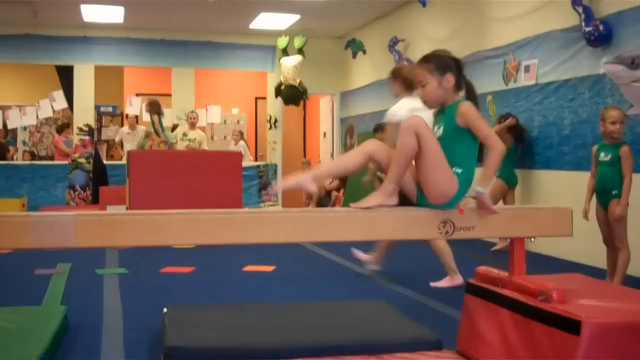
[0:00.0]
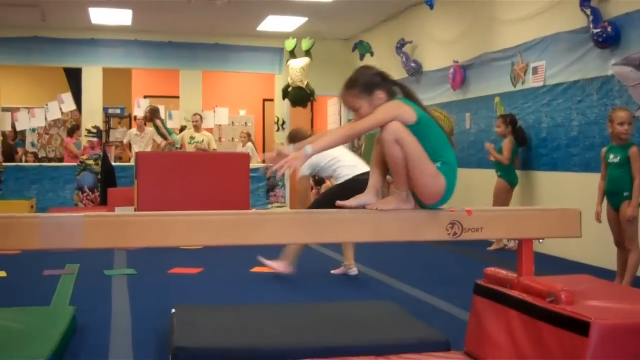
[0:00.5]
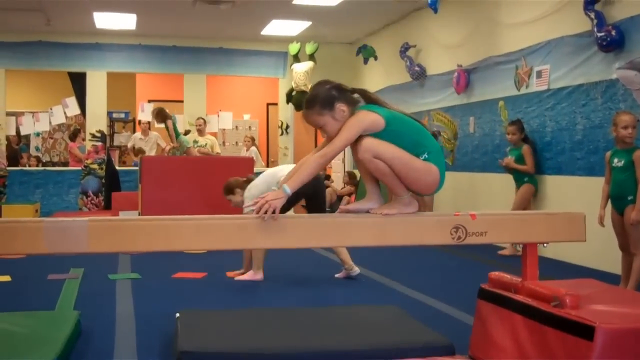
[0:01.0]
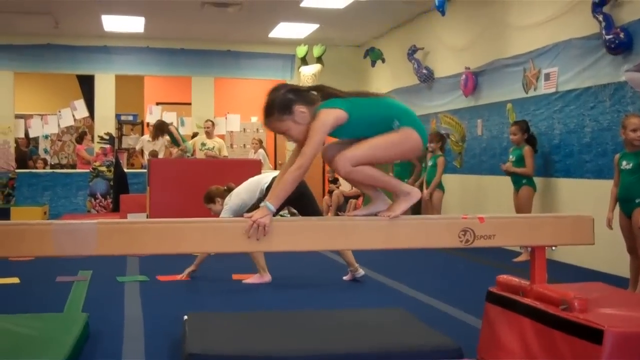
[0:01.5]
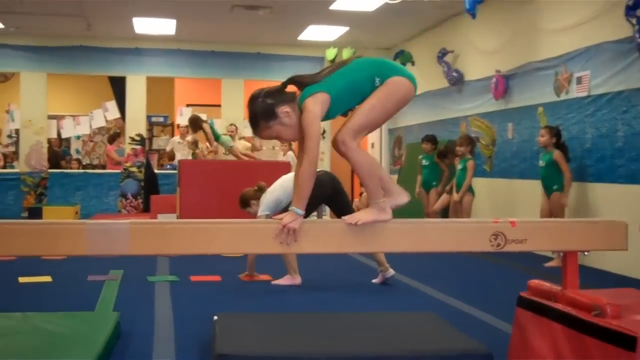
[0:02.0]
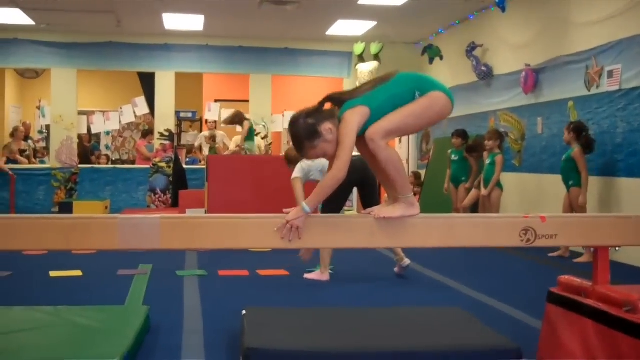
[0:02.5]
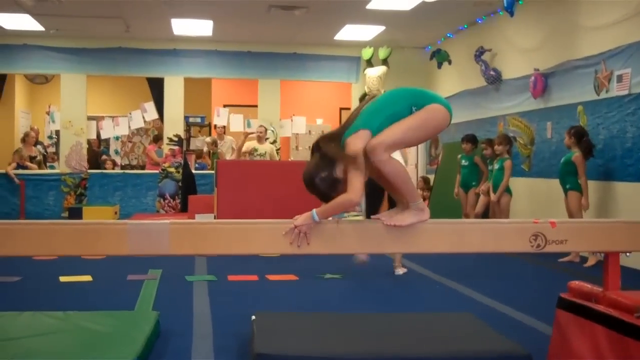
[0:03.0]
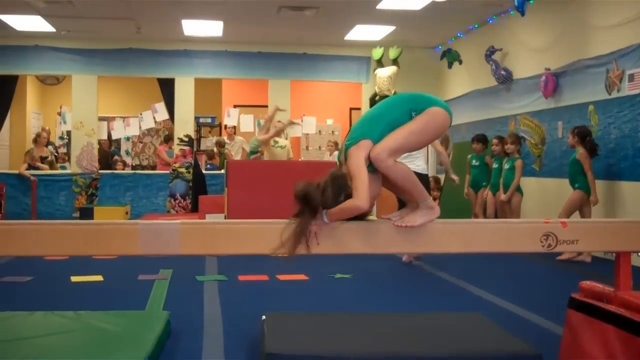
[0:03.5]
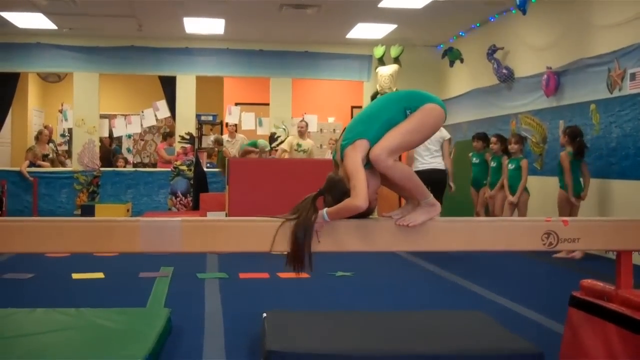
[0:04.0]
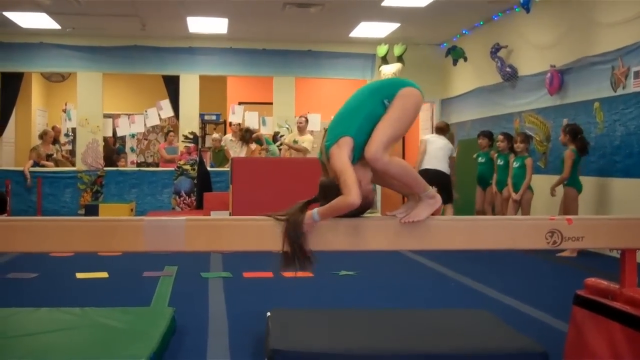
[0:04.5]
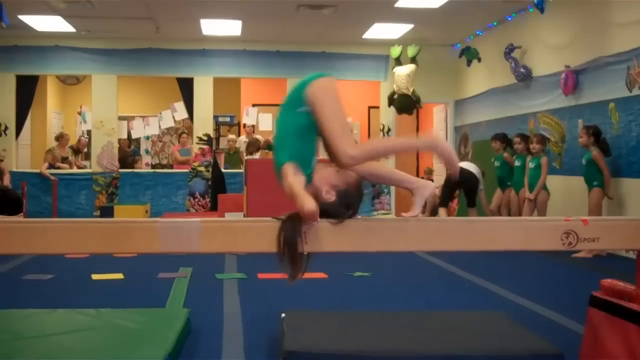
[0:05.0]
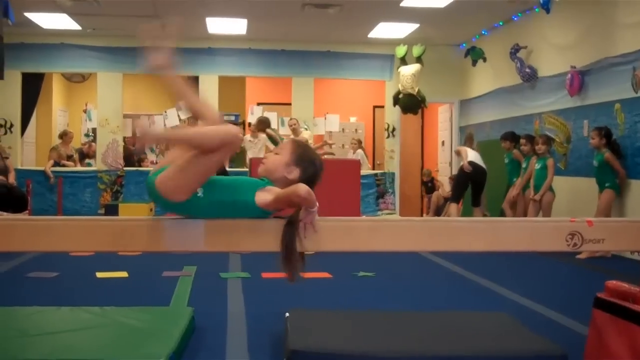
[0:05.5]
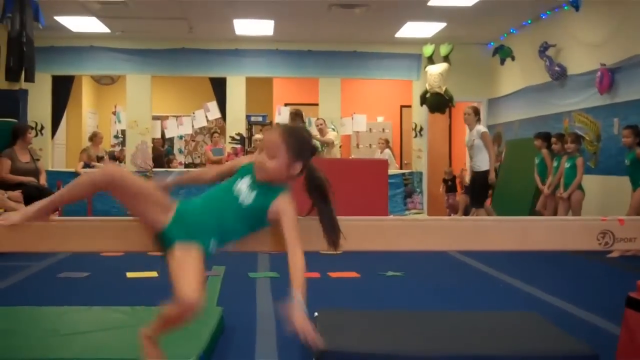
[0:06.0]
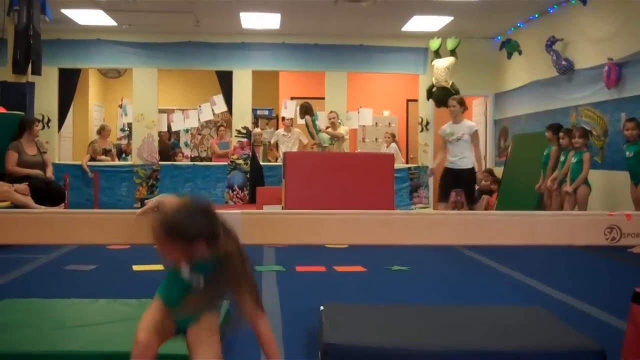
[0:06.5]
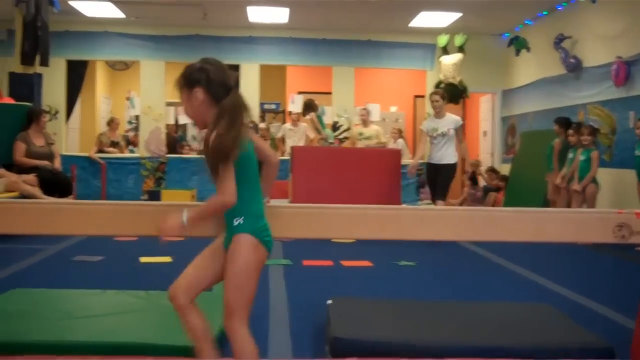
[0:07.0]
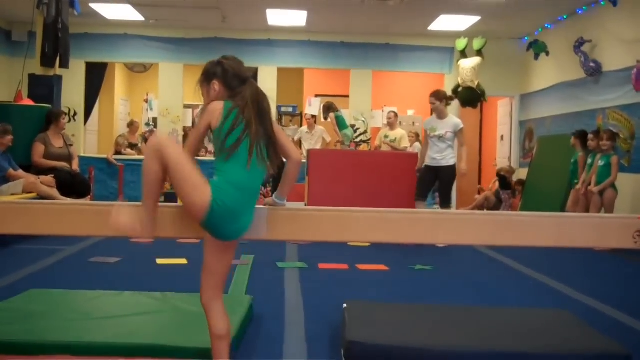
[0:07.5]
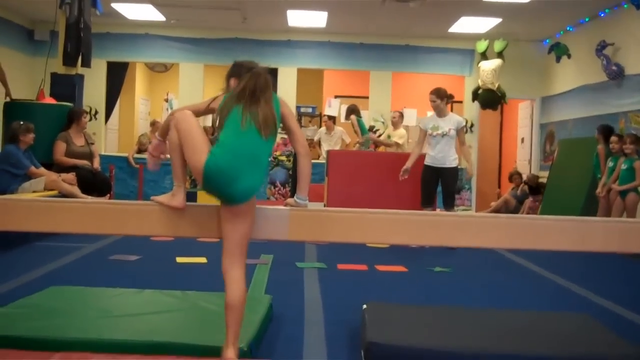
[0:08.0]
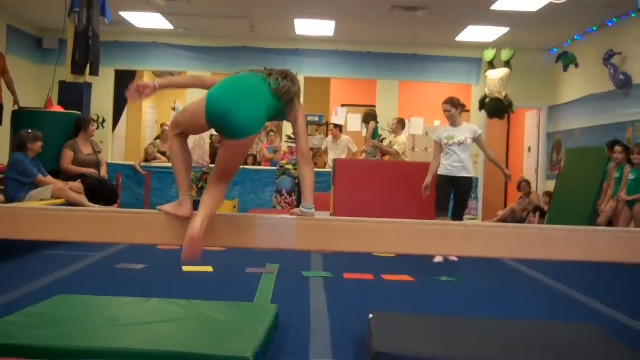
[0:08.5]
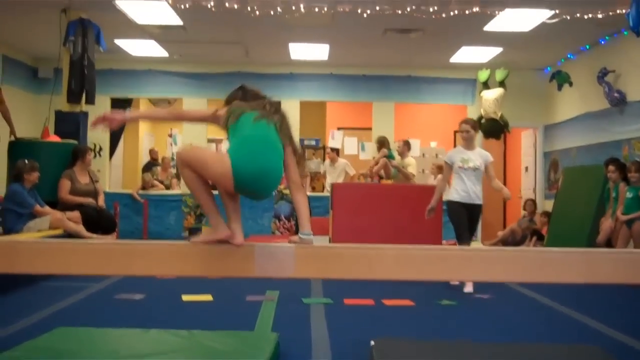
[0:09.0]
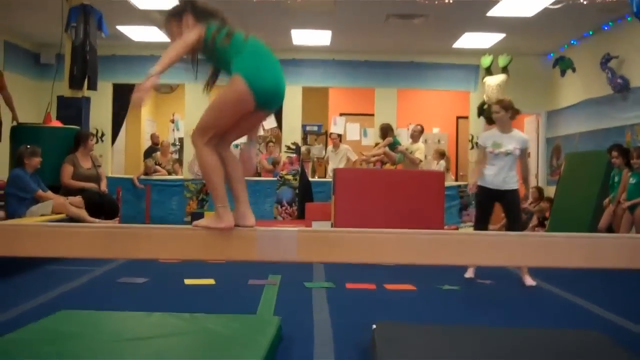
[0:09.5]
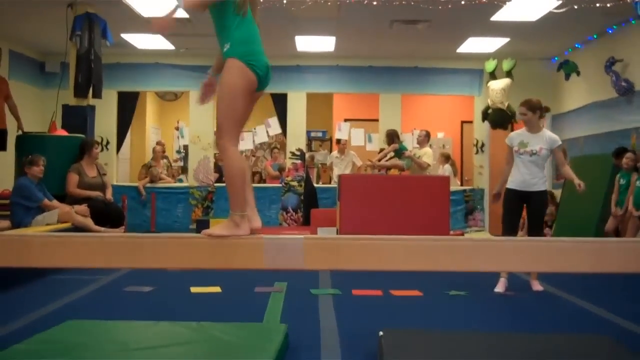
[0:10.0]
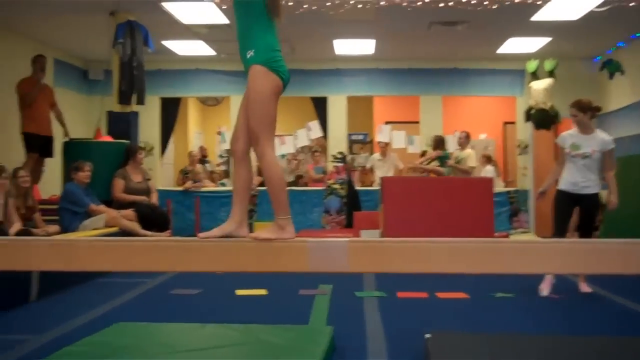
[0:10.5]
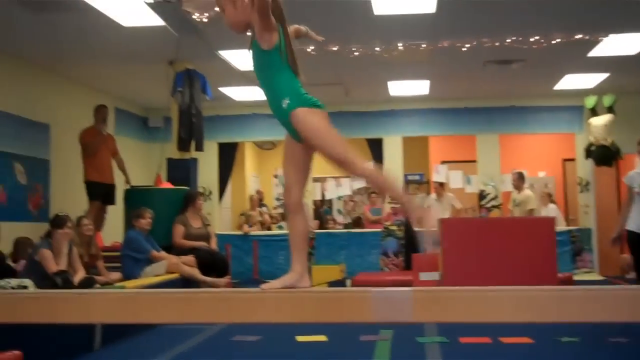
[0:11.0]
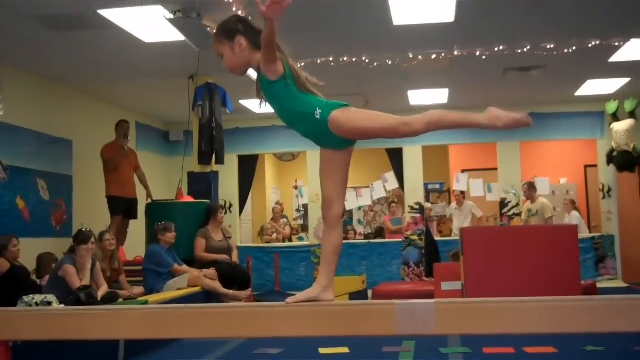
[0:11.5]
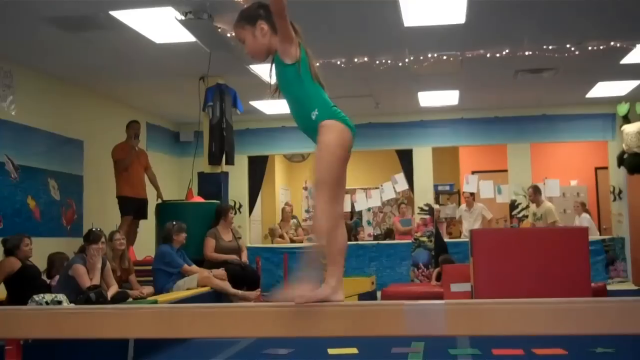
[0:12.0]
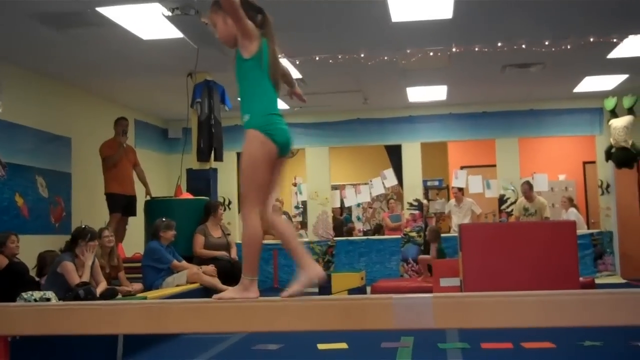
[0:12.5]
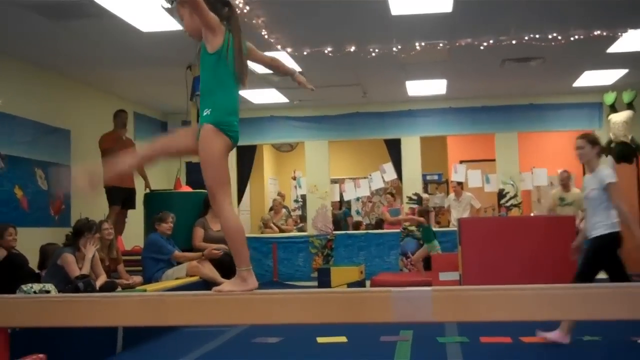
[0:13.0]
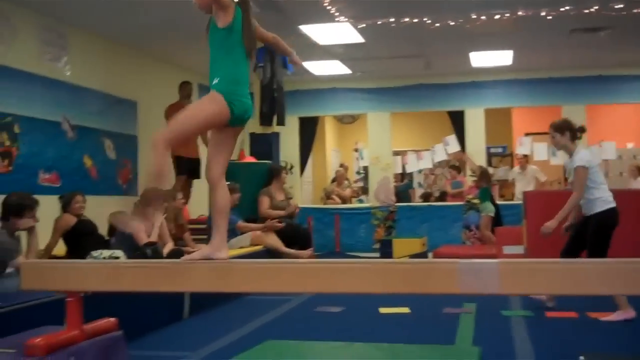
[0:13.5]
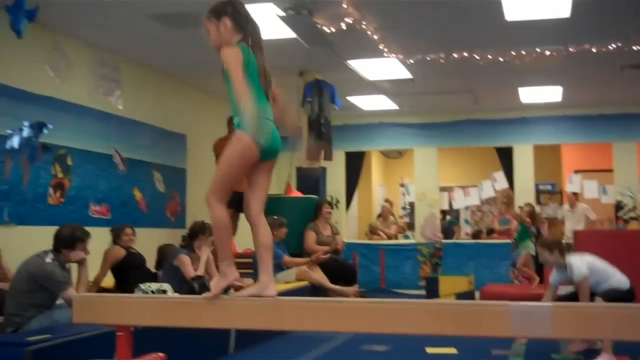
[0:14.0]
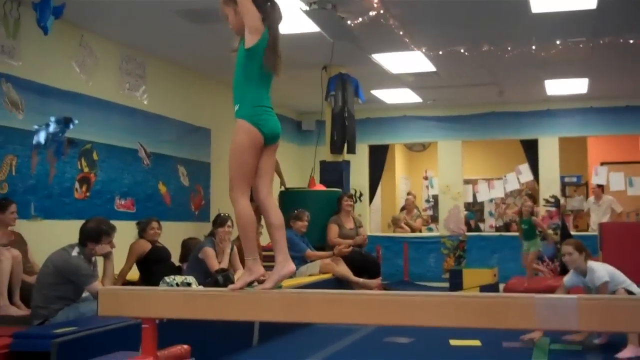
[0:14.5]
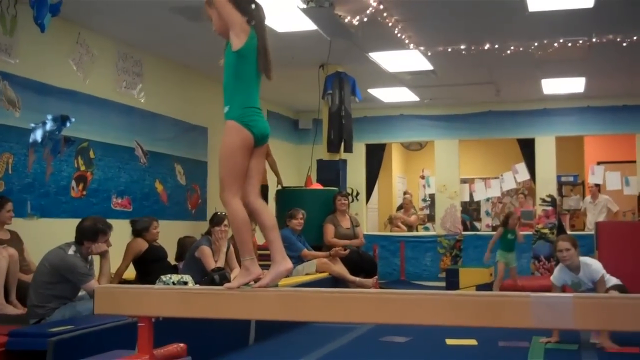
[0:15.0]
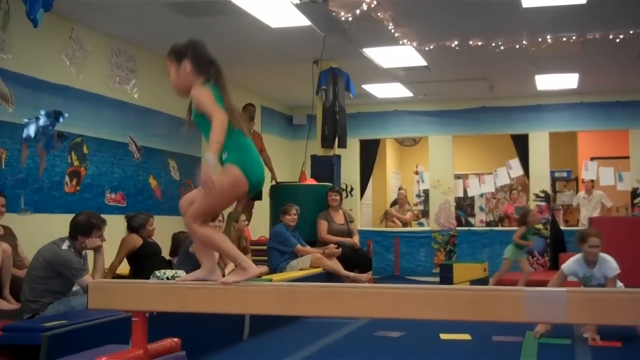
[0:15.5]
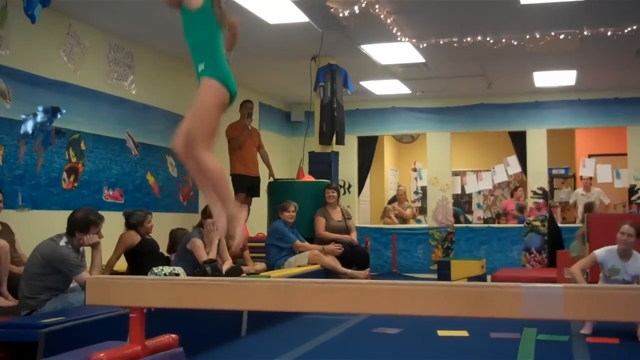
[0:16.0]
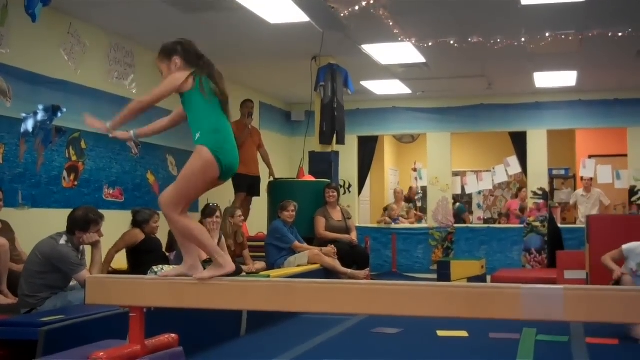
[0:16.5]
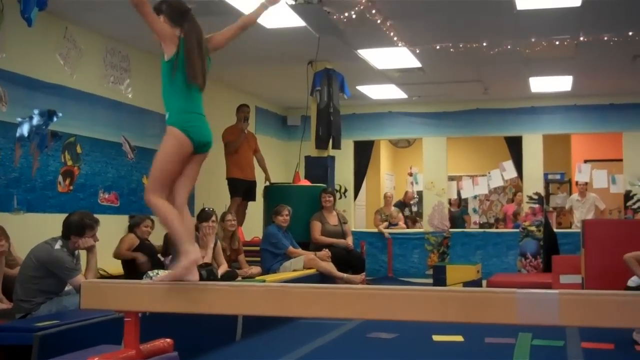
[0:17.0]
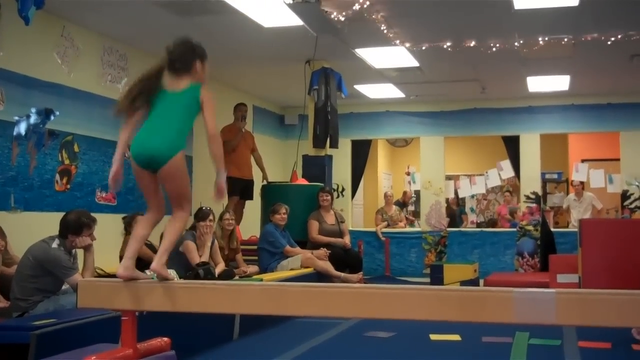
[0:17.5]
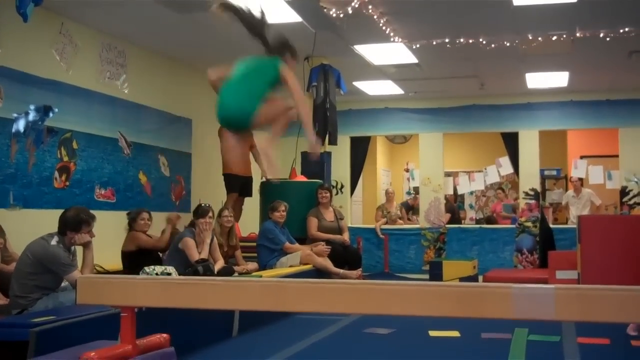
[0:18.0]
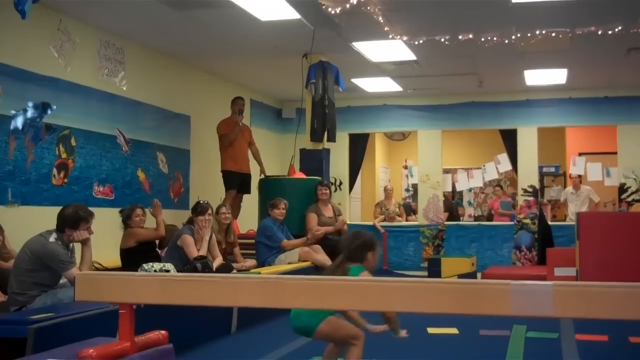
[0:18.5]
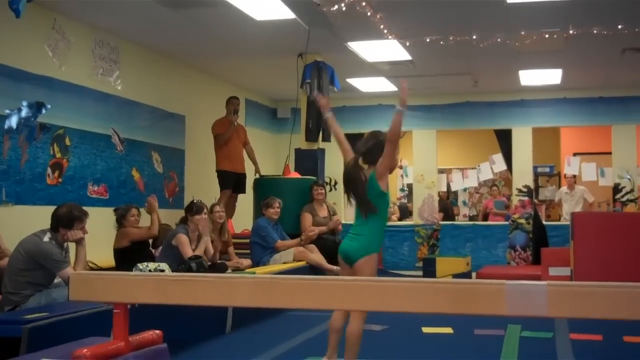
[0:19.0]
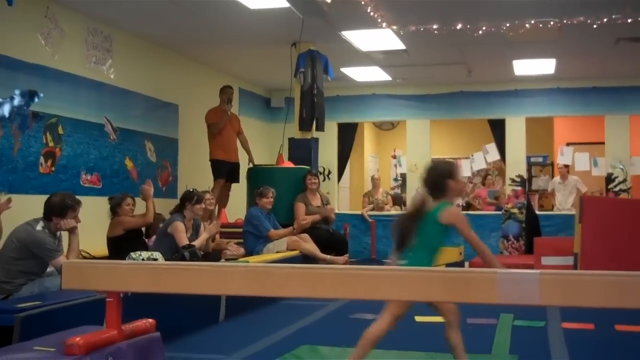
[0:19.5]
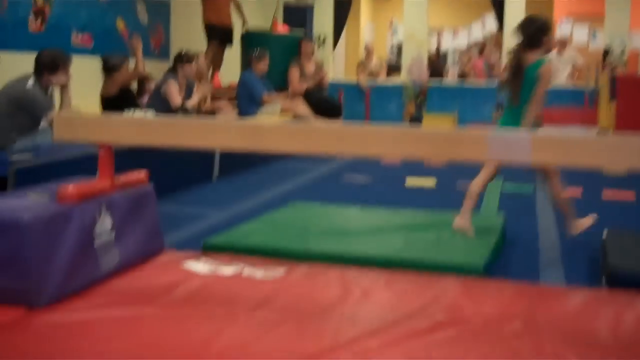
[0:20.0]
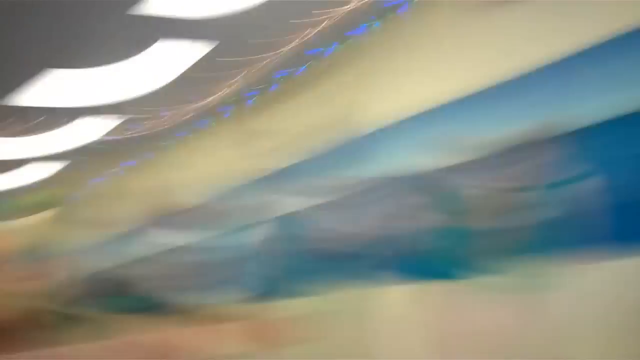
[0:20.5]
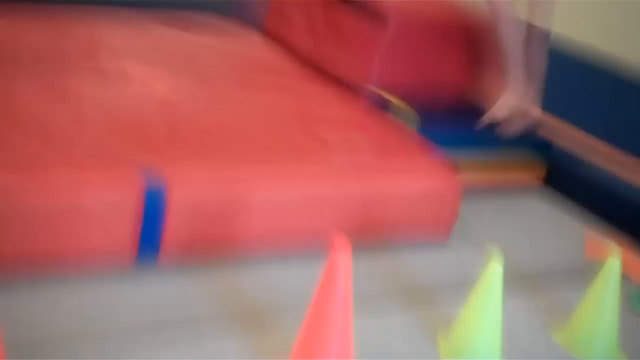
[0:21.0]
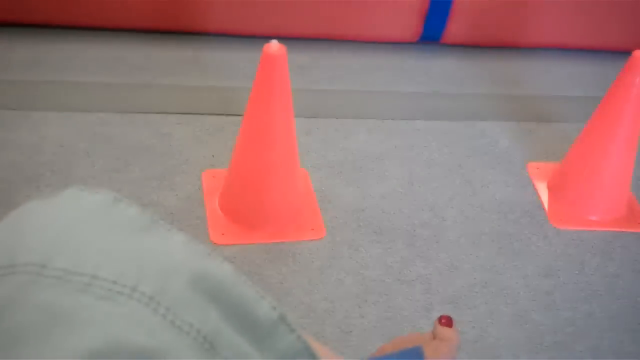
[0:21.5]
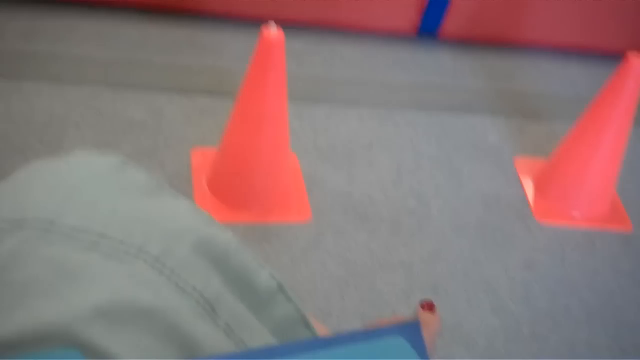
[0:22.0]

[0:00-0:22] The scene is inside what seems to be a gymnasium of some sort, with some setups visible. Several young girls wear green one-piece unitards or one-piece suits. The girls mainly seen are probably under 10 years old, maybe as young as seven or eight. Near the beginning, one young girl standing on a high beam is about to stand on her head: she puts her head on the beam and attempts to kind of roll over in a somersault-type move, but she kind of falls off to the side. She gets right back up and tries again. She then stands on the beam, kind of bounces up, stands on her right leg while holding her left leg behind her, sort of moves around, and does a jump and turn on the beam, staying on it. Then she jumps off the beam. Meanwhile, in the background, other girls are either waiting their turn or listening to some other instructor. Also in the background is an adult woman who might be a teacher, wearing a white top.